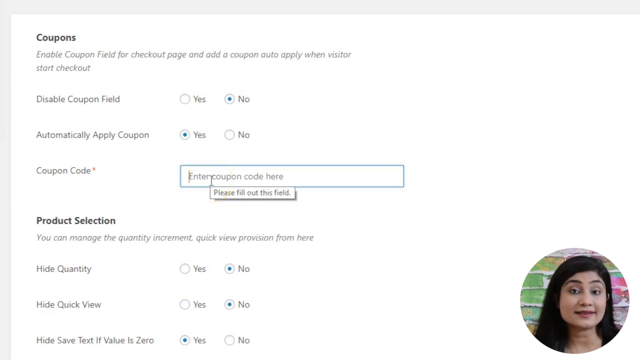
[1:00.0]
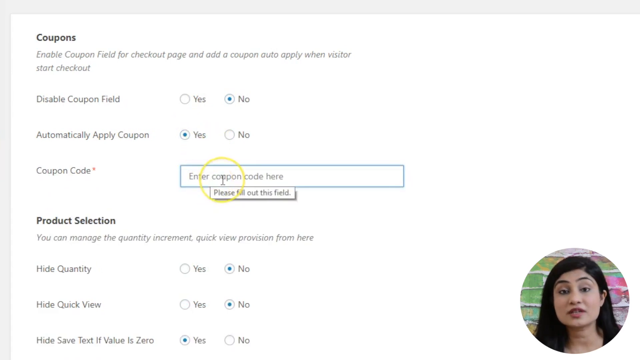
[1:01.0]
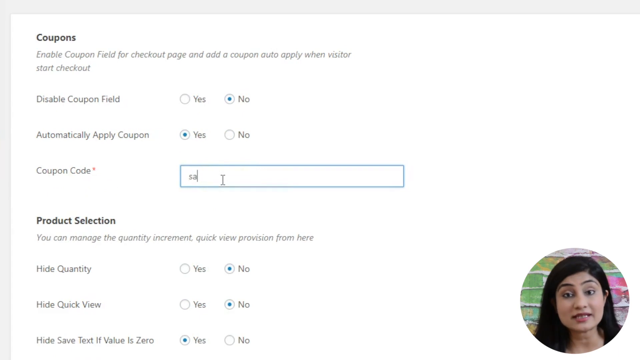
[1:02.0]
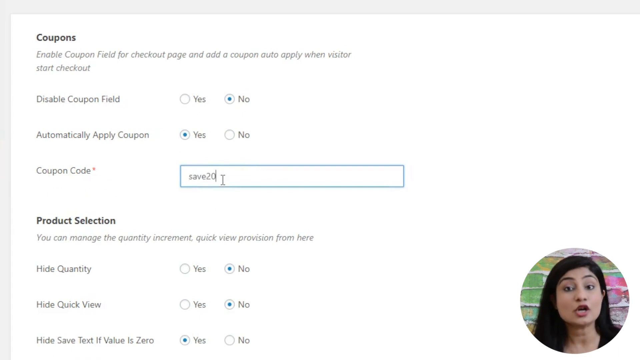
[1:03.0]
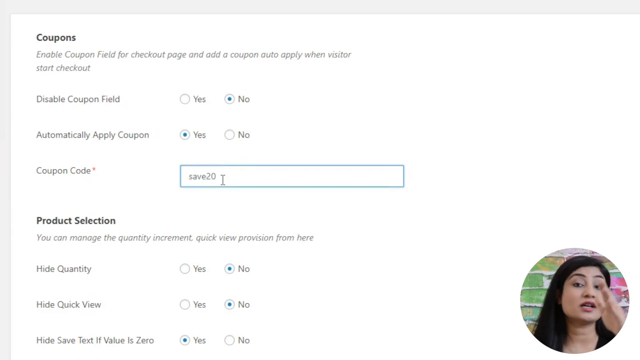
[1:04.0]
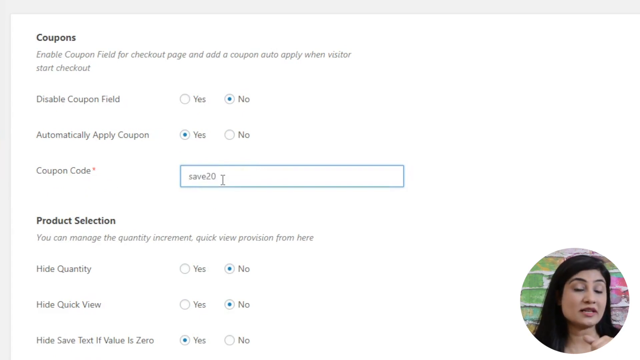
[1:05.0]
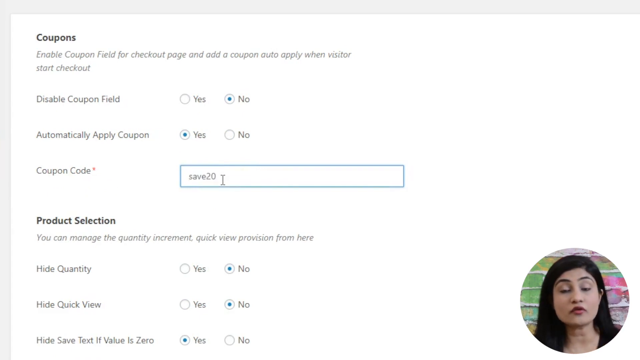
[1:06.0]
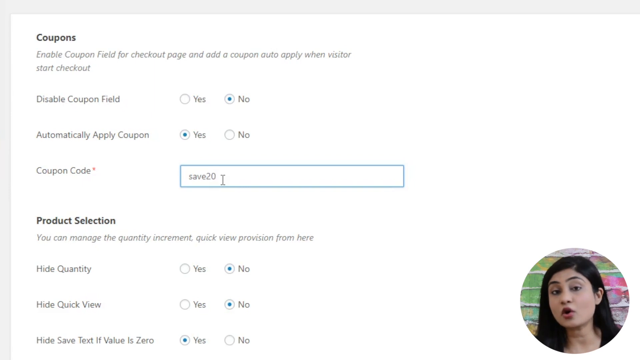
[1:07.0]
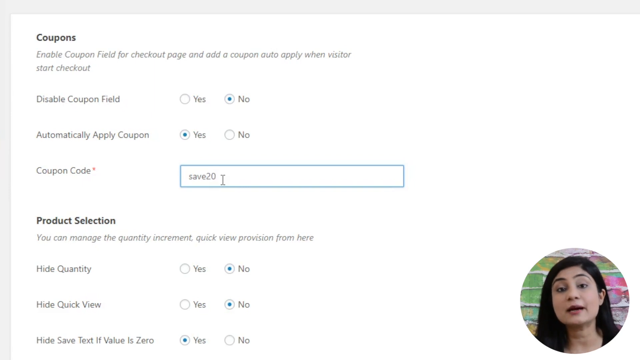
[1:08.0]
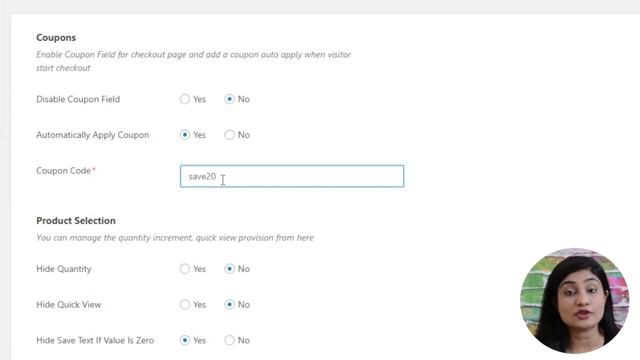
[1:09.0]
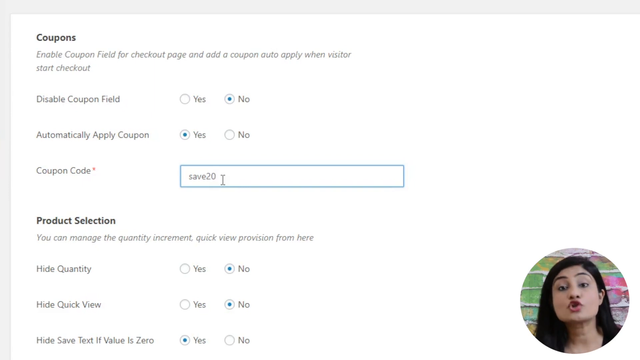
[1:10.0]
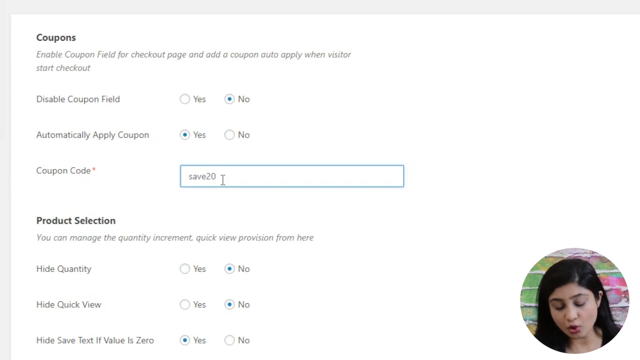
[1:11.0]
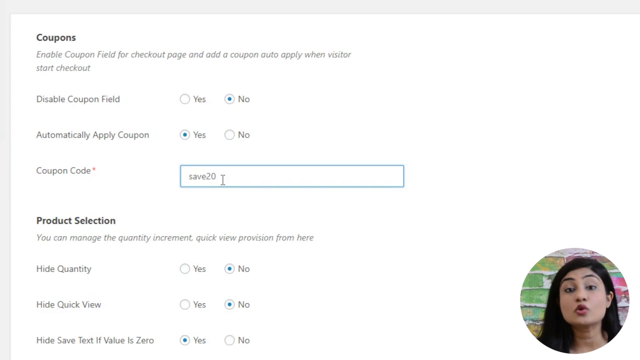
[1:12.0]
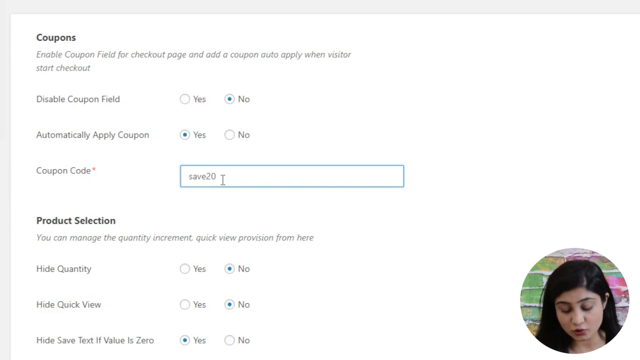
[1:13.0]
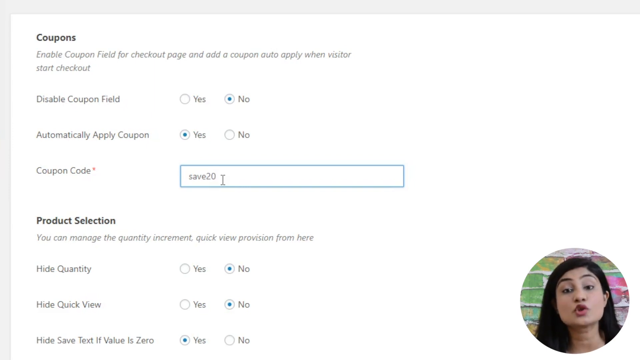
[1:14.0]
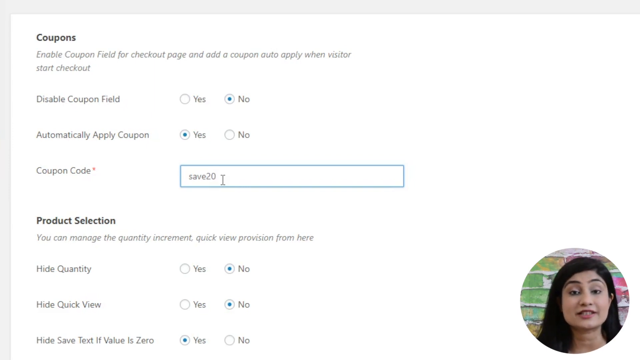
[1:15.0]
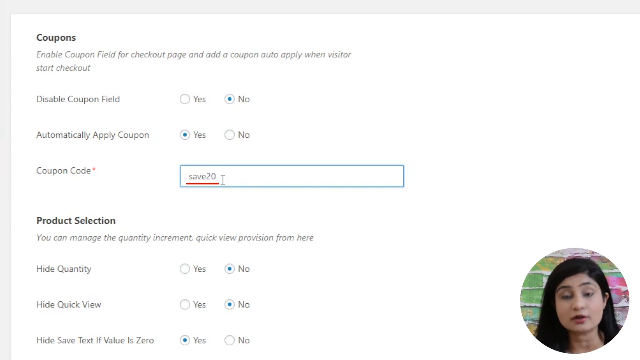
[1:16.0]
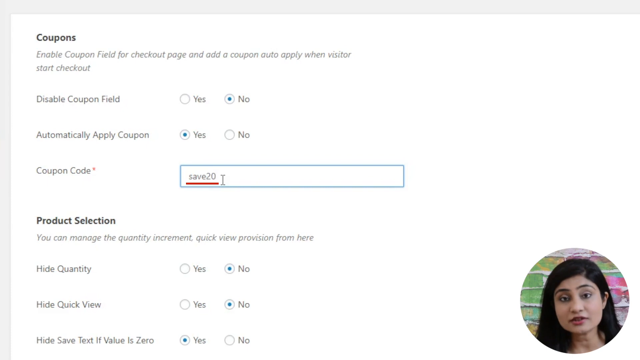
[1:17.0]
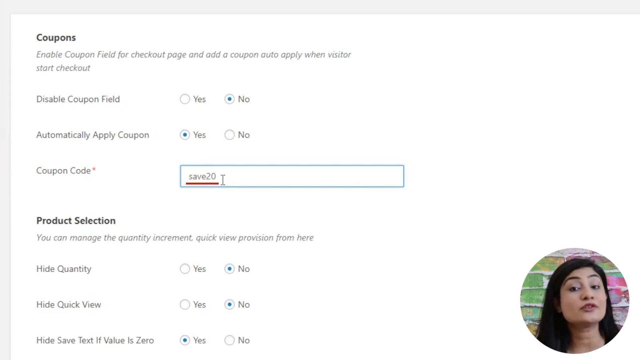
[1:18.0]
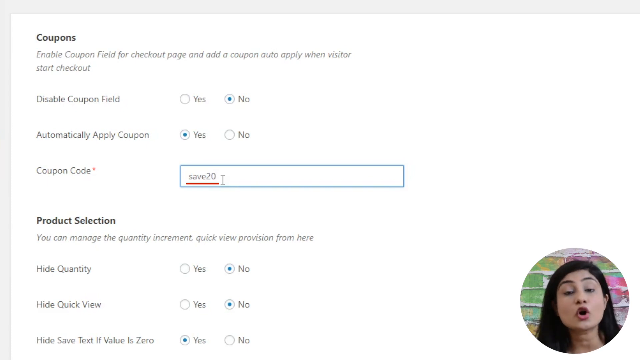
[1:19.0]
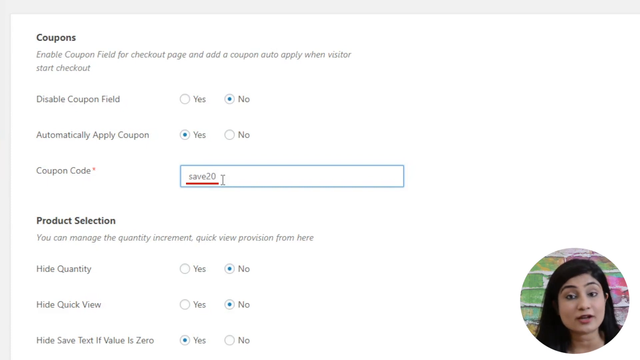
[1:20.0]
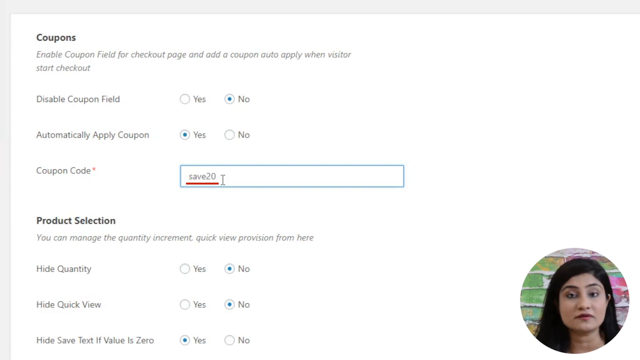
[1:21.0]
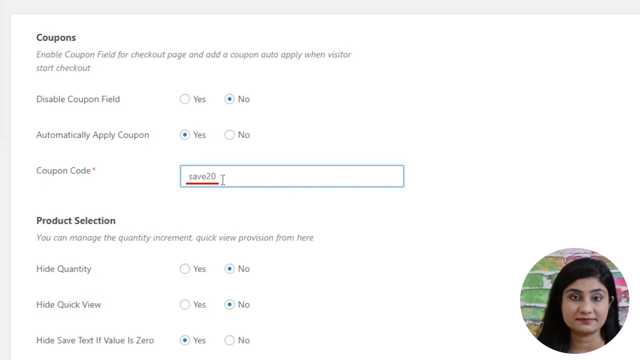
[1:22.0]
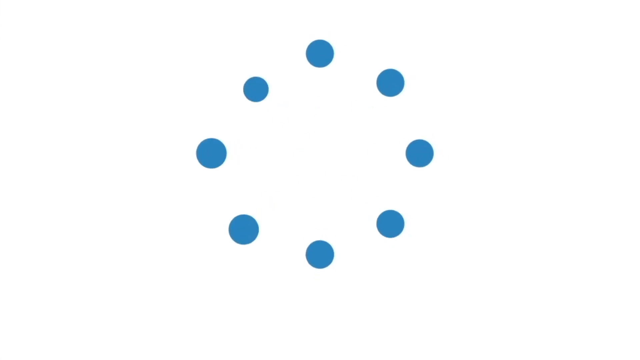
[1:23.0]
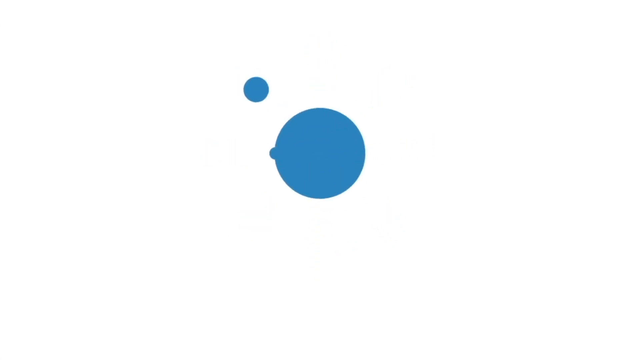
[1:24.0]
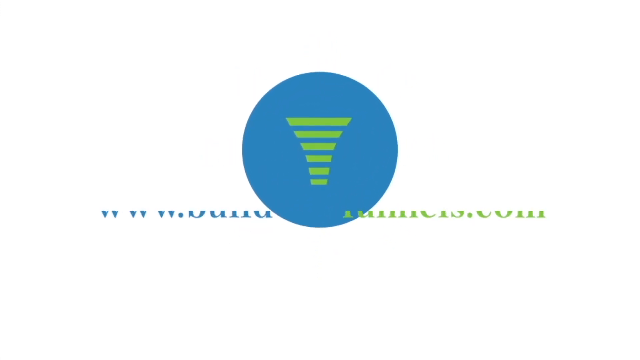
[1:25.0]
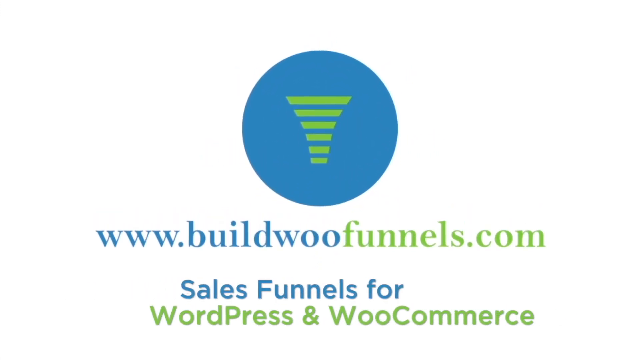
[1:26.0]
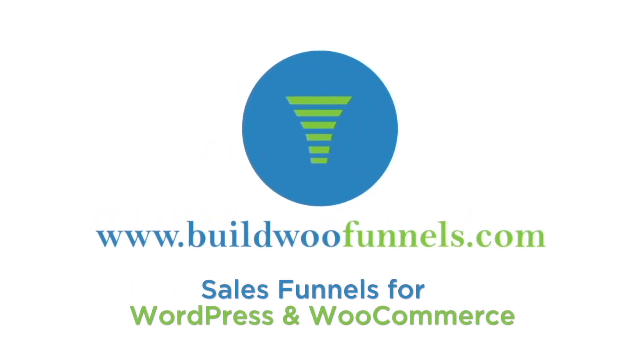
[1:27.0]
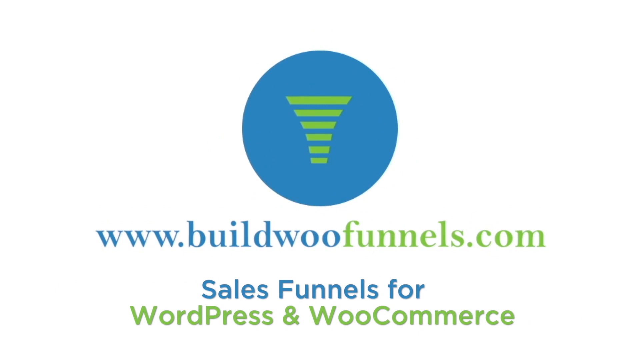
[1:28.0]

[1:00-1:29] A web page is pulled up with different areas of information and buttons being clicked on. A pointer with a yellow circle around it moves over the information. In the lower right corner is a circle with a woman speaking directly into the camera. Someone fills out information in a box labeled "Coupon Code," and the coupon code box then reads "save 20," underlined in red. A white screen then pops up with a blue dot in the middle and a website underneath reading "www.buildwoofunnels.com," and below that "Sales funnels for WordPress and WooCommerce."